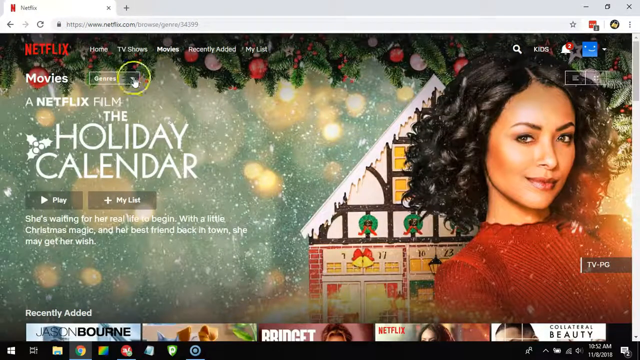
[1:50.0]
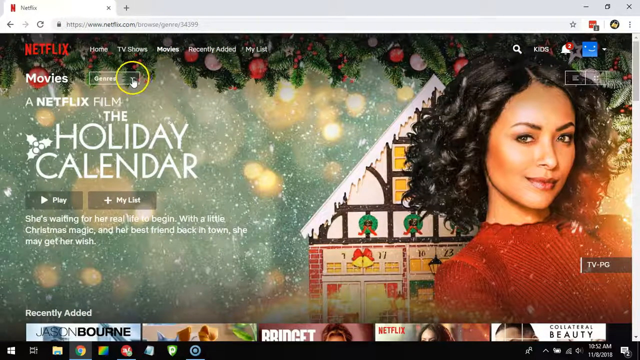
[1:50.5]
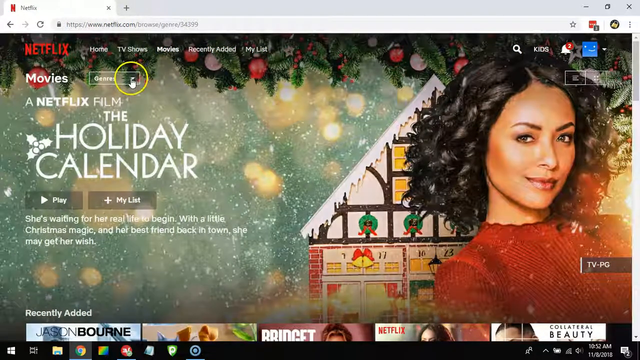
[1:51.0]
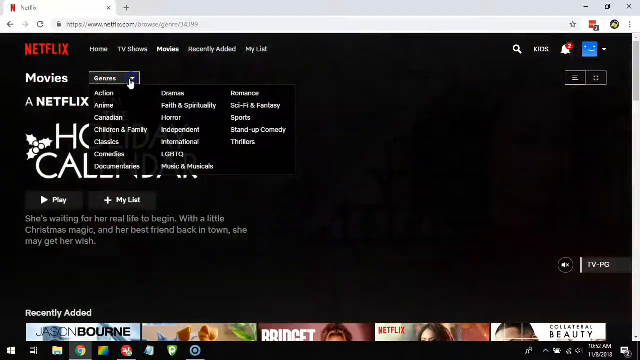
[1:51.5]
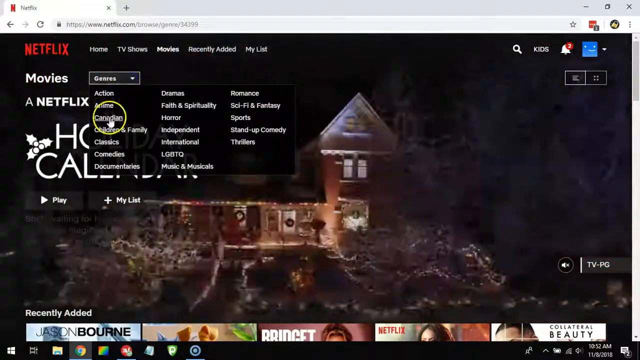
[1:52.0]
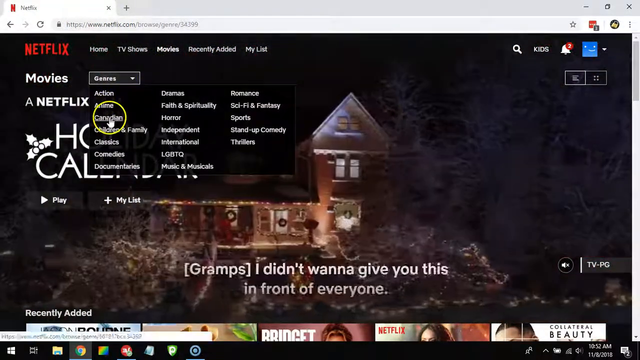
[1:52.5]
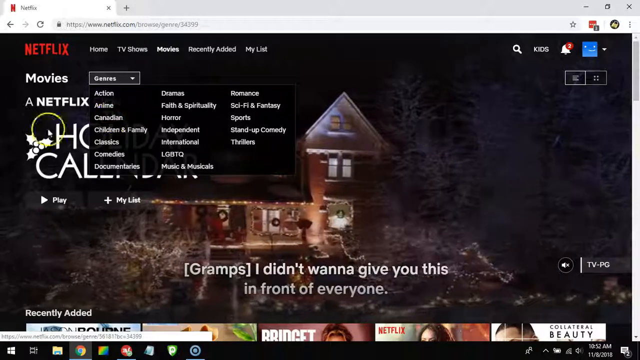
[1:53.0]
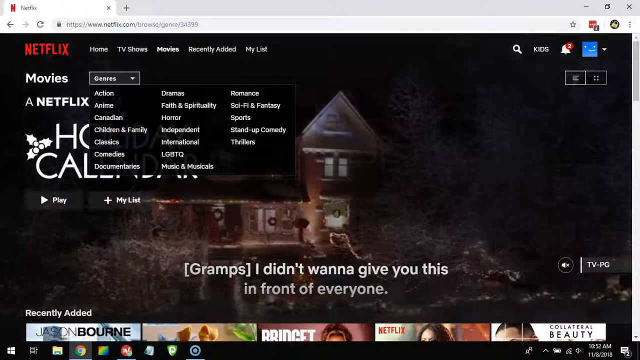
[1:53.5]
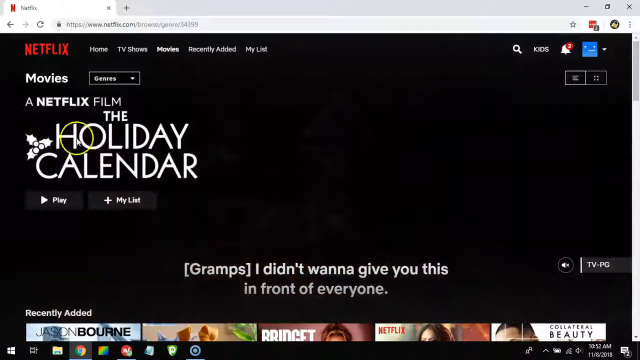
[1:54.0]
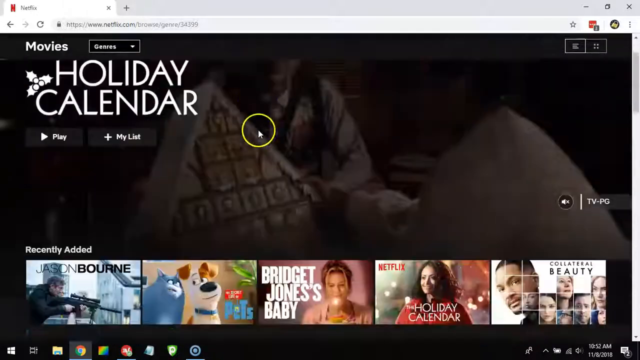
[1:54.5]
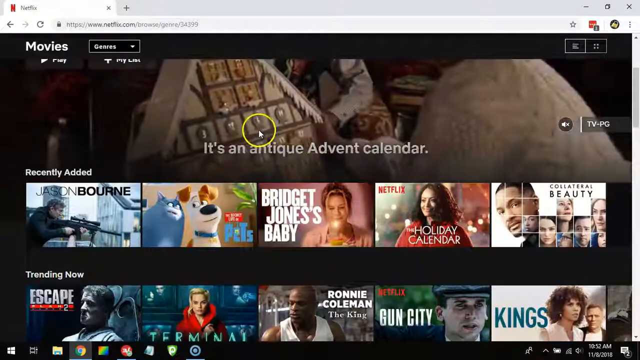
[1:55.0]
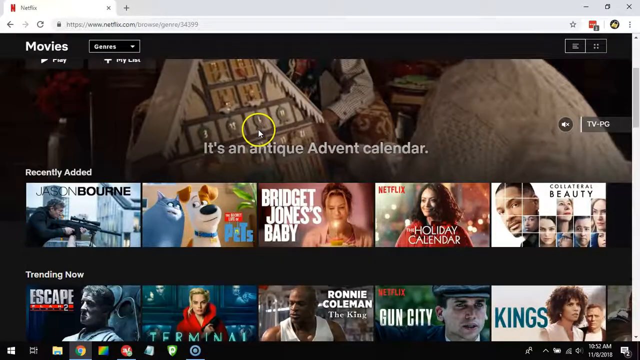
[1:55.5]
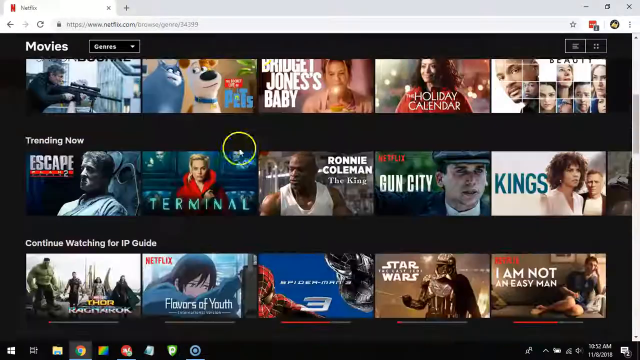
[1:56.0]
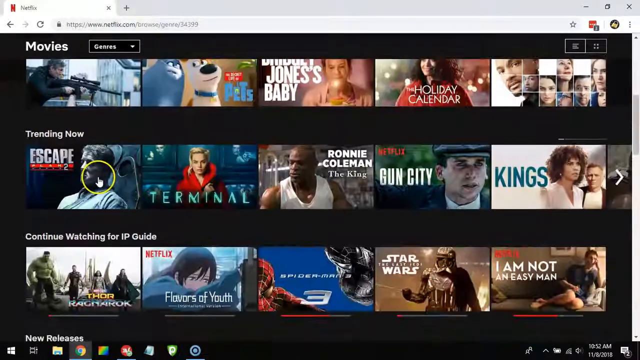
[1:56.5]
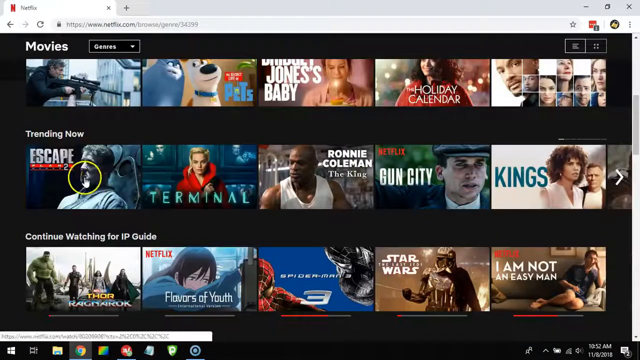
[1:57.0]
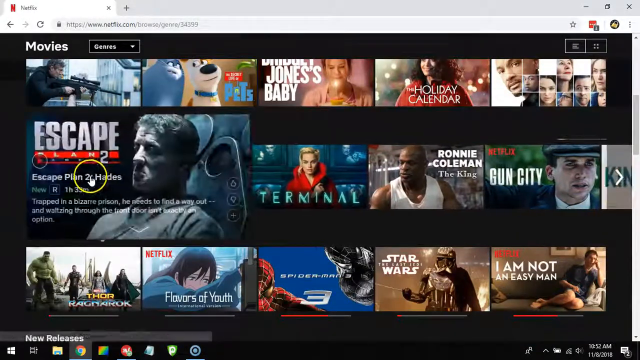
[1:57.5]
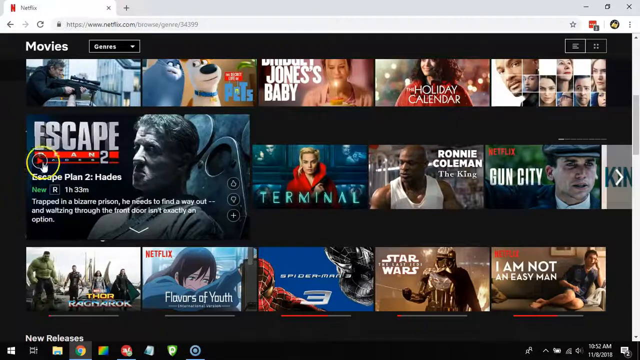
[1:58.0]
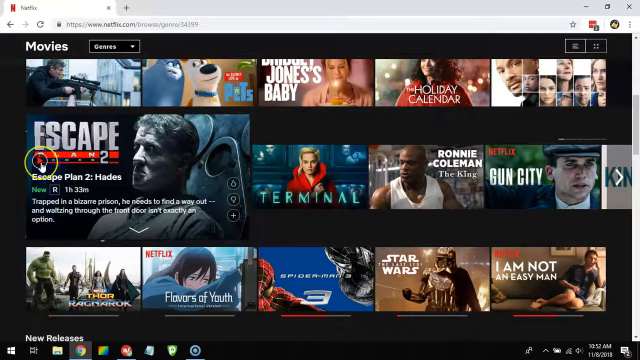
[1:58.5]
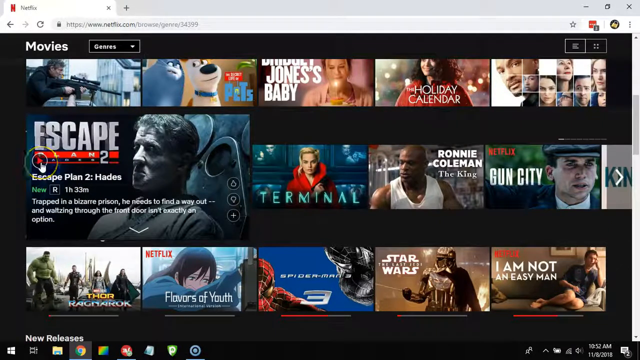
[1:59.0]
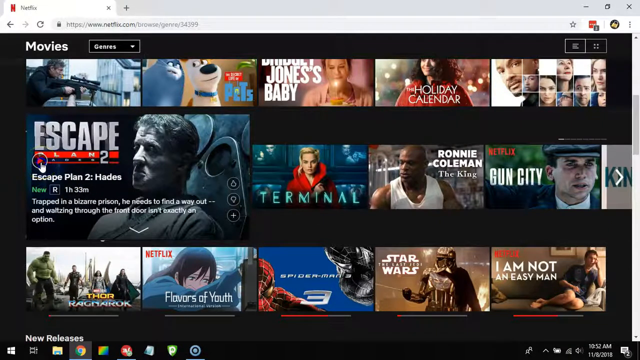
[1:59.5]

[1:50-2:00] With the VPN on, the Netflix browse page is open again. The genres menu is selected but nothing is picked, and the person backs out of it. They scroll down and hover over Escape Plan 2: Hades, whose image shows Sylvester Stallone up against a wall, or possibly locked in a cell. It is labeled "new" and lists a running time of an hour and 33 minutes.